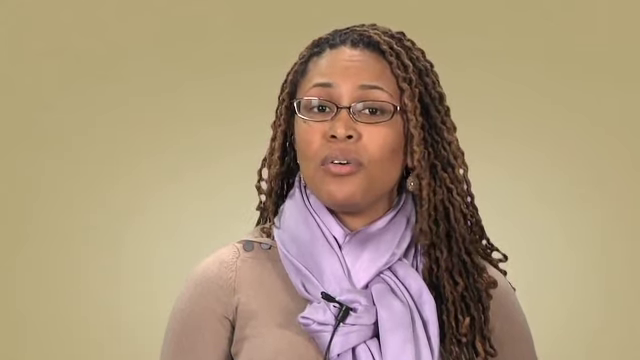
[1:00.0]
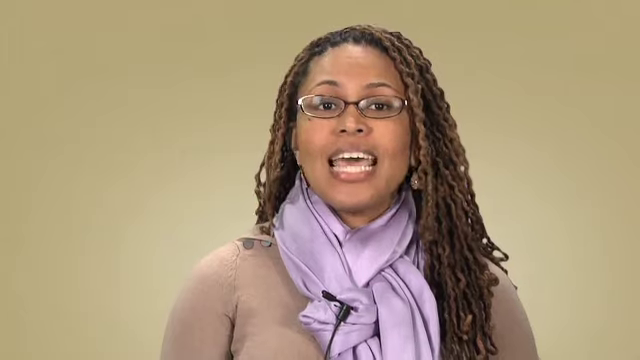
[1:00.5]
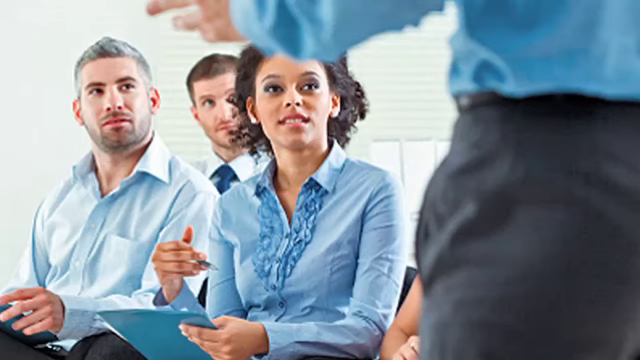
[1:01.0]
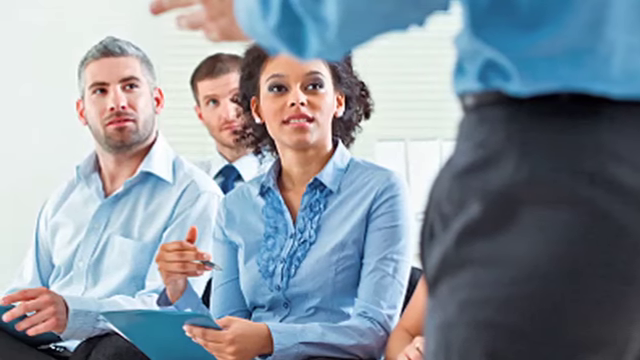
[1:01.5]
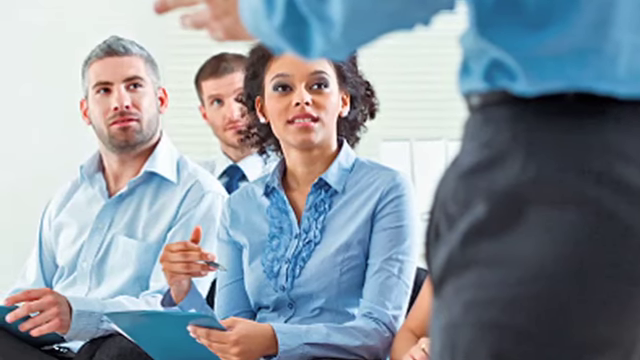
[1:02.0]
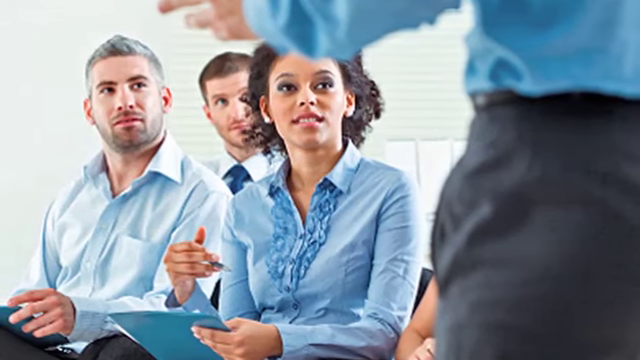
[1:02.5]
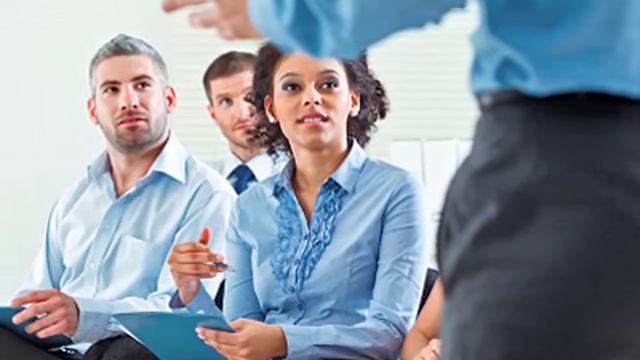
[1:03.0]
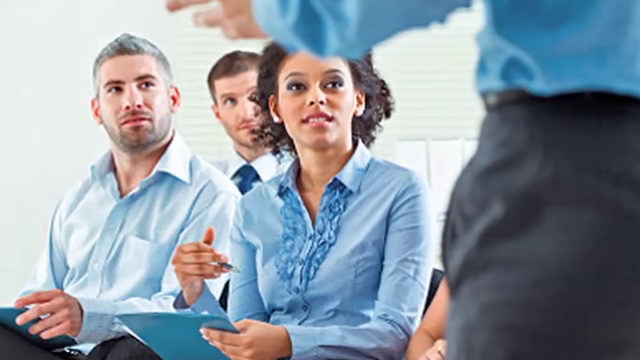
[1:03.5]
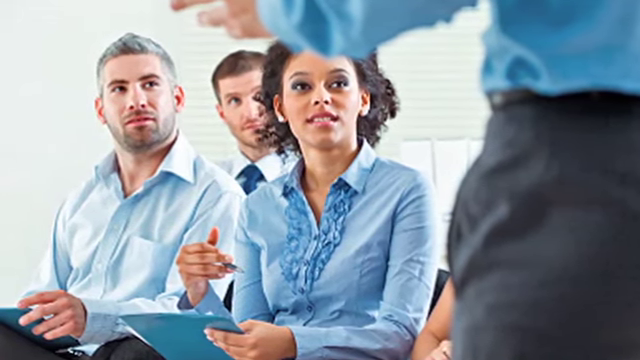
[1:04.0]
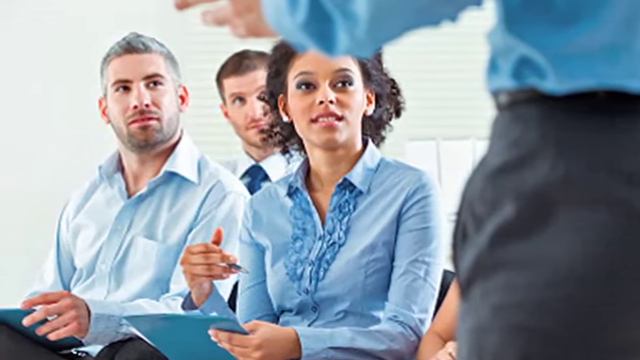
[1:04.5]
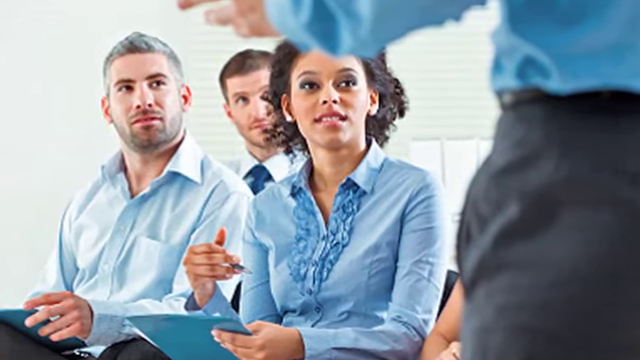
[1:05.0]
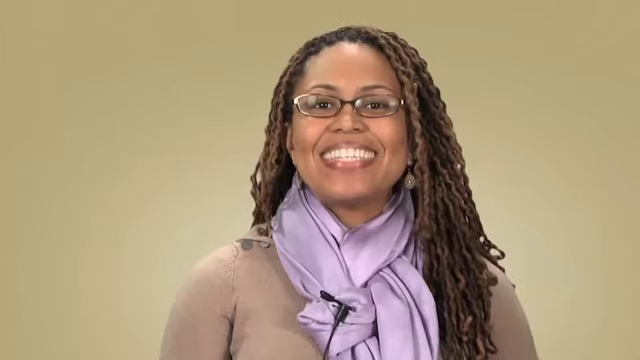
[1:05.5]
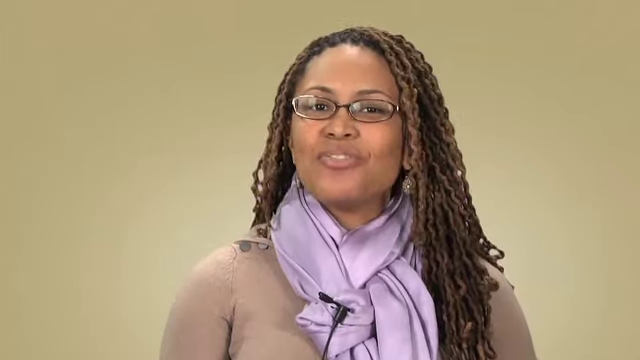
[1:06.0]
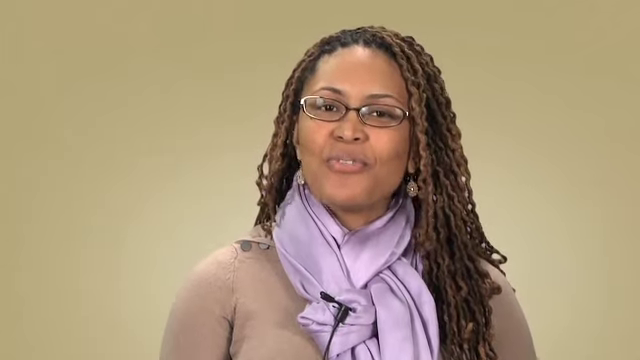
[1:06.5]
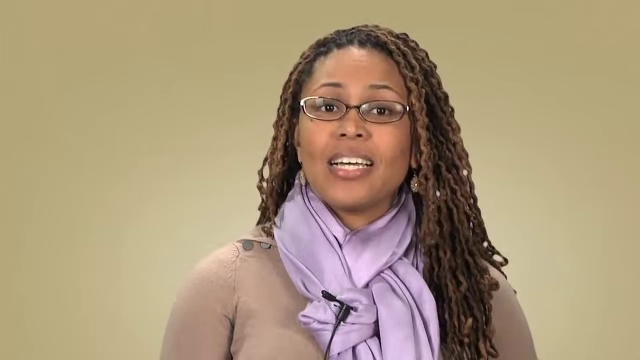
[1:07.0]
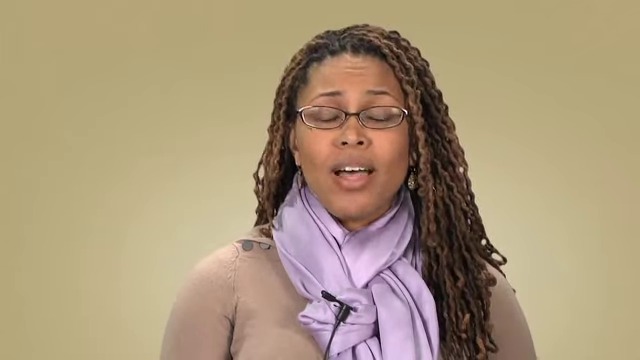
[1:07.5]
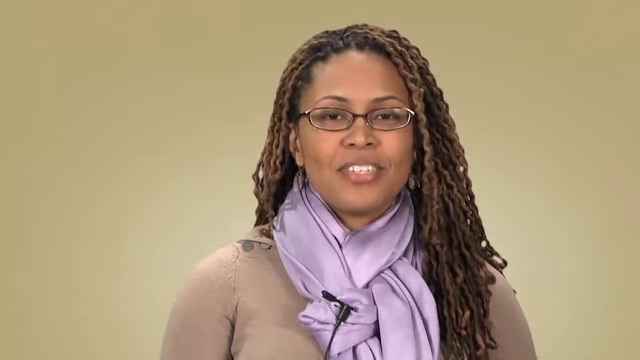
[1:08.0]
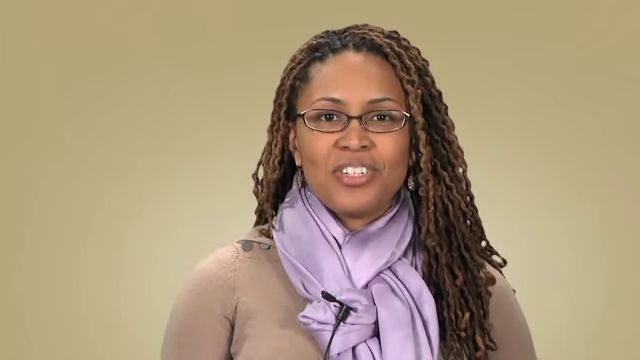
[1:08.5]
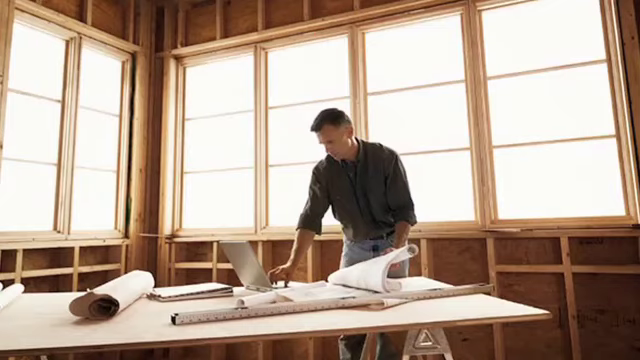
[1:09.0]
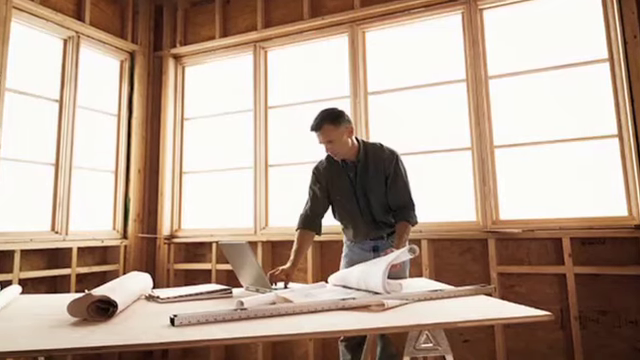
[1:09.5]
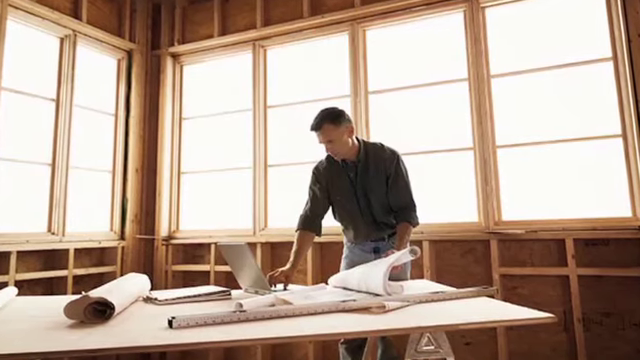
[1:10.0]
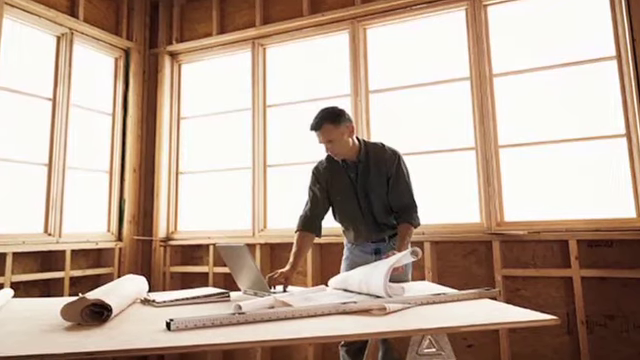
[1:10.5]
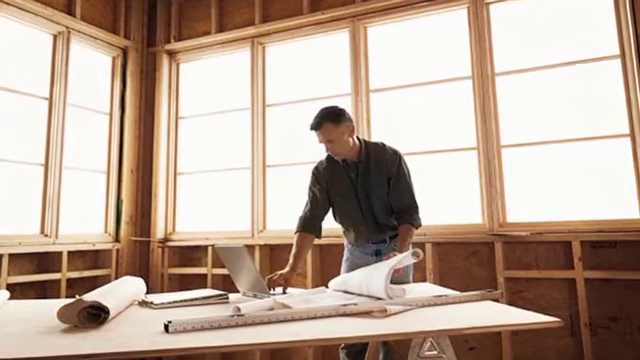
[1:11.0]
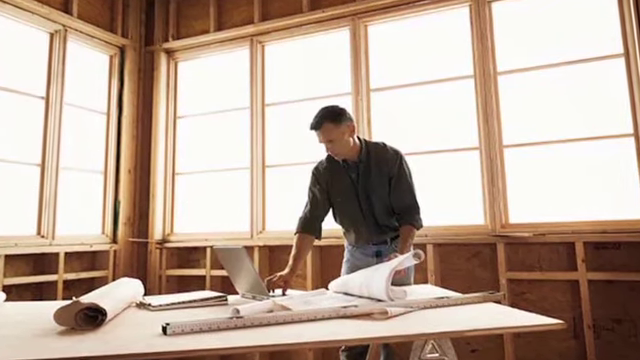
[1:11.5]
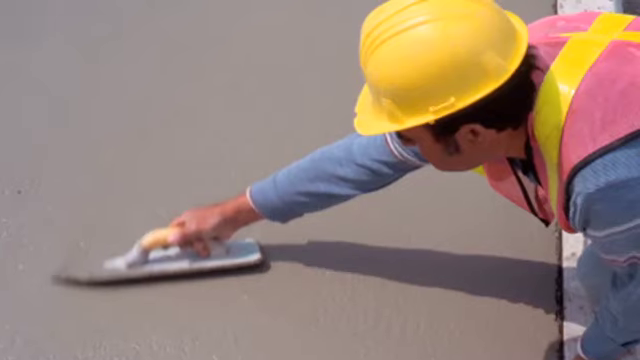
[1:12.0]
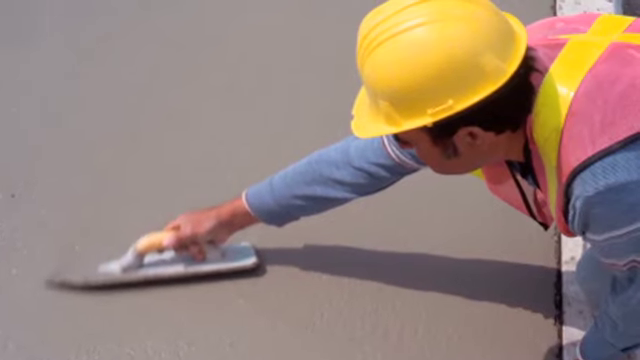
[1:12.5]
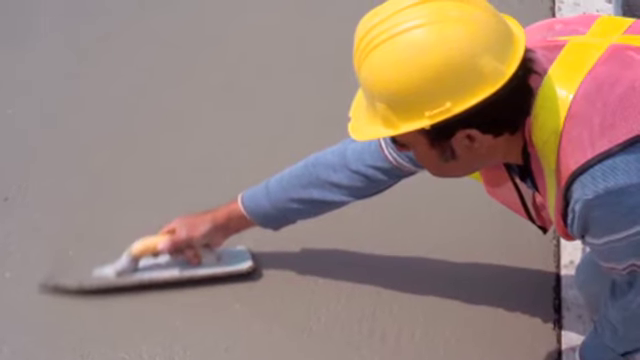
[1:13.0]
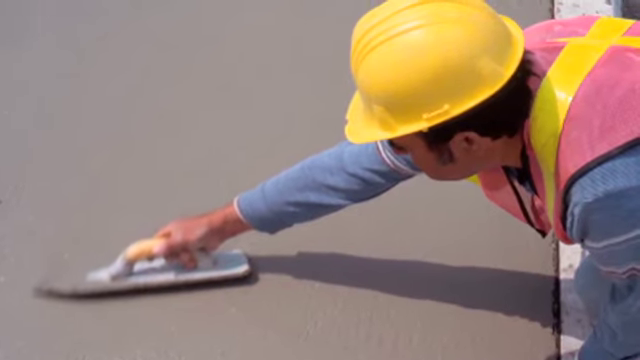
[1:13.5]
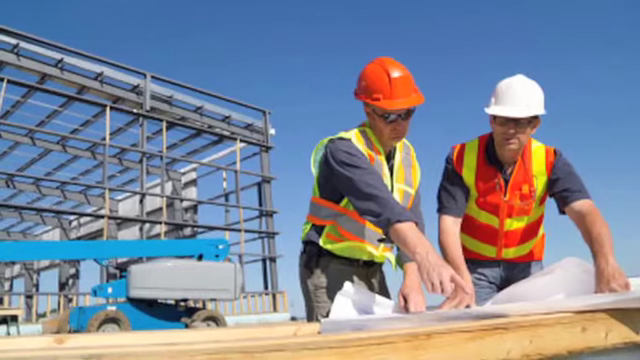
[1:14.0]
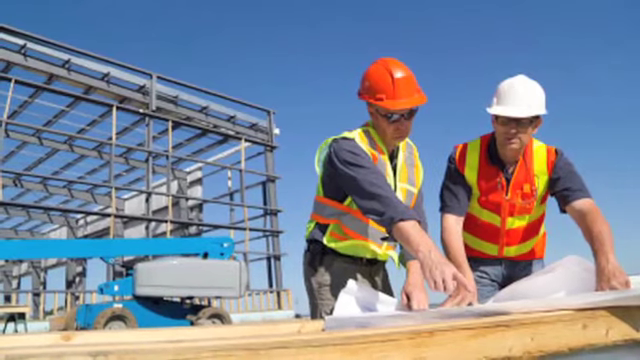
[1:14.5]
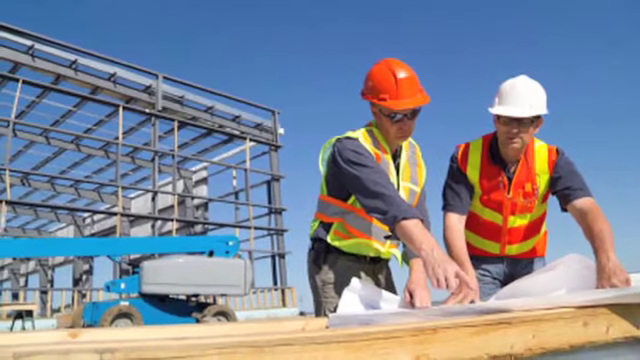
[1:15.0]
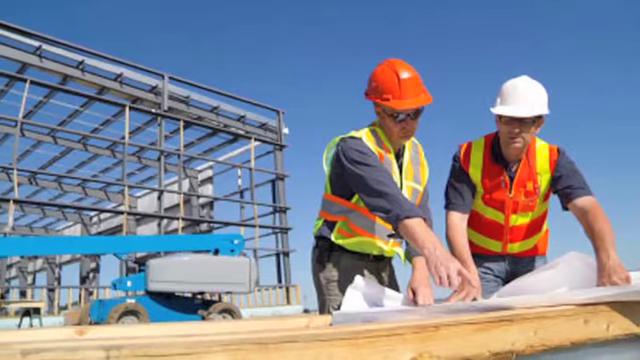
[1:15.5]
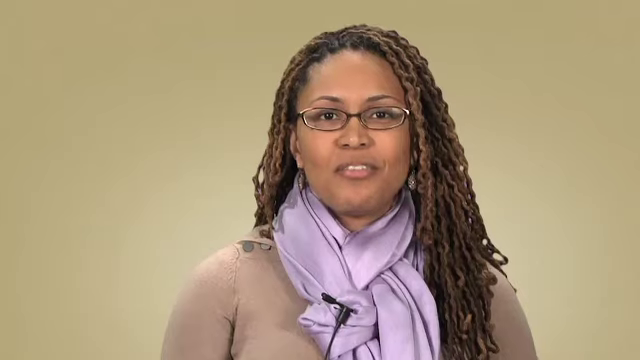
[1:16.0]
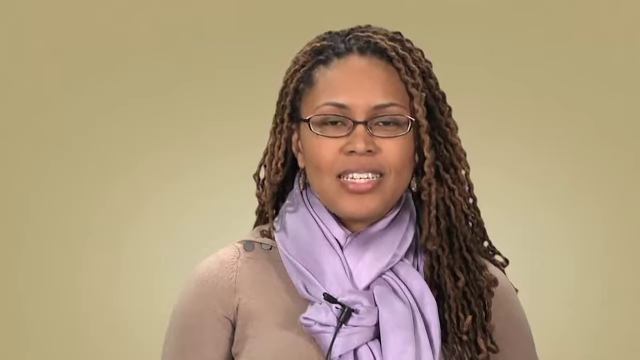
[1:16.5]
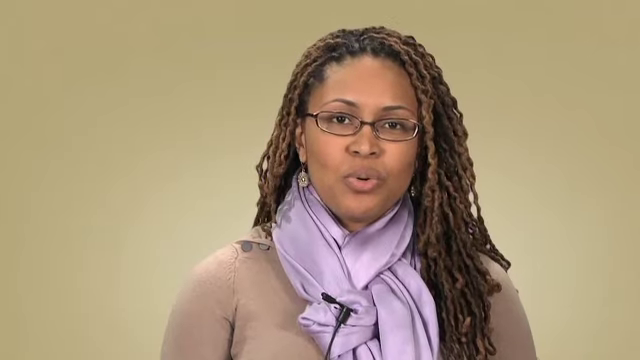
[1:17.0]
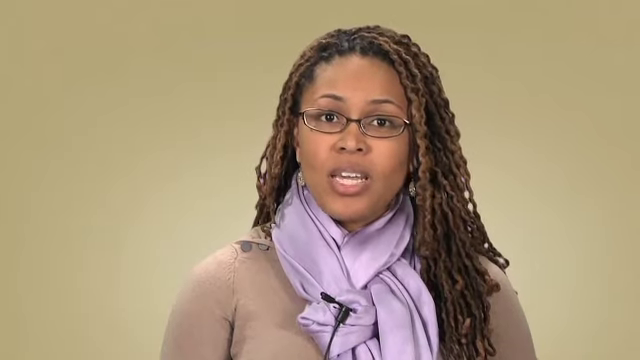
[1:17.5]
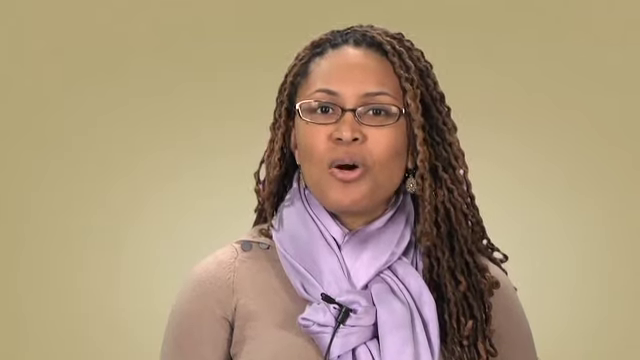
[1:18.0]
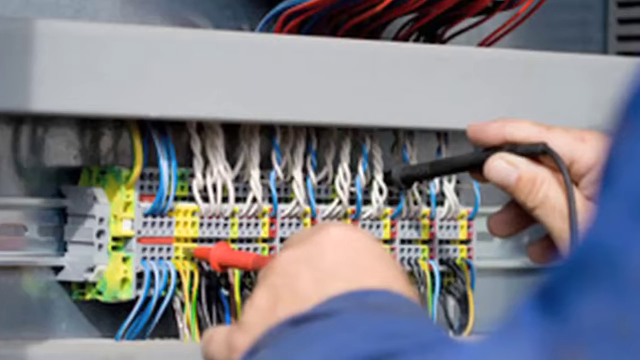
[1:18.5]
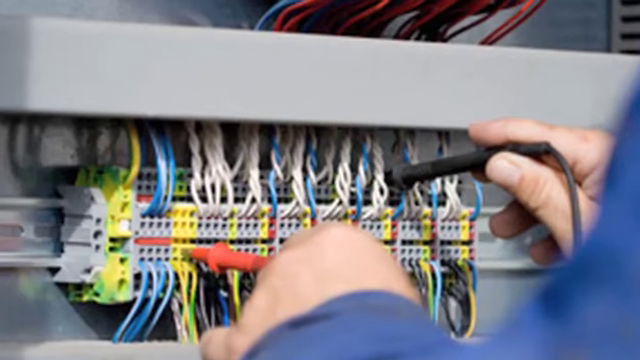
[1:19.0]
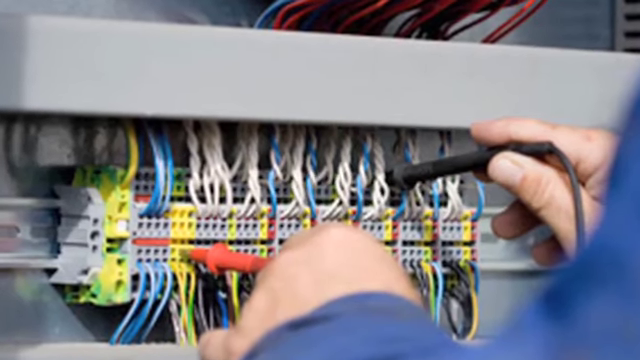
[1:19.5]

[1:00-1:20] Three people appear to be in a classroom or being taught. One is an African-American woman in a long-sleeve blue shirt with a collar. A Caucasian man sitting next to her also wears a long-sleeve blue shirt with a blue collar. Behind them, a Caucasian man with short brown hair, in what looks like a collared dress shirt with a blue tie, is the instructor teaching. The two are sitting, watching and learning. The video returns to the African-American woman who has apparently been talking throughout; she wears glasses, a purple scarf, a brown sweater and earrings, and her long hair is braided. Next is a picture of a man who looks like he has just built the frame of his house or building, with everything done except apparently the insulation. He has drawings on the table and a computer he appears to be using to get everything together. Then a man in a yellow hardhat smooths out freshly laid concrete with a smoothing tool. Finally, two men wear hardhats, one orange and one white, with a building under construction behind them that looks like just a skeleton with nothing filled in yet.